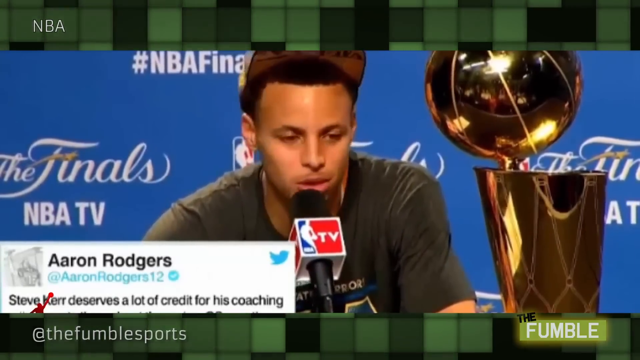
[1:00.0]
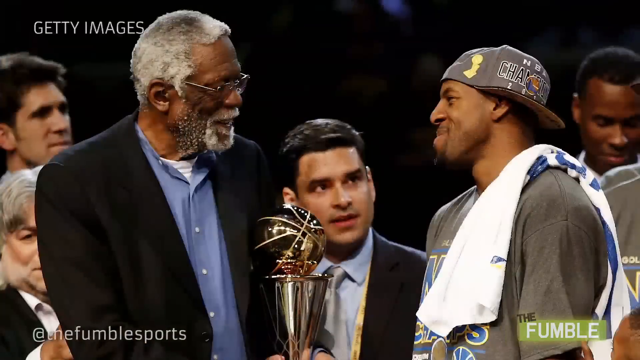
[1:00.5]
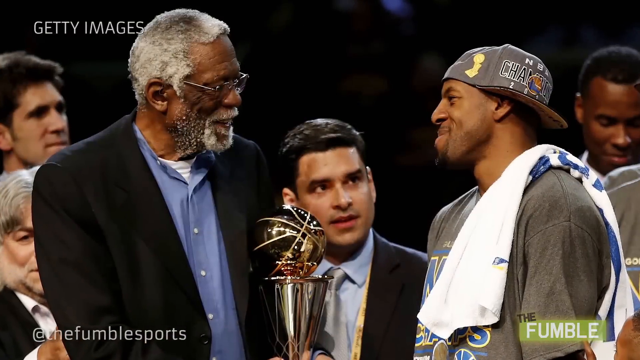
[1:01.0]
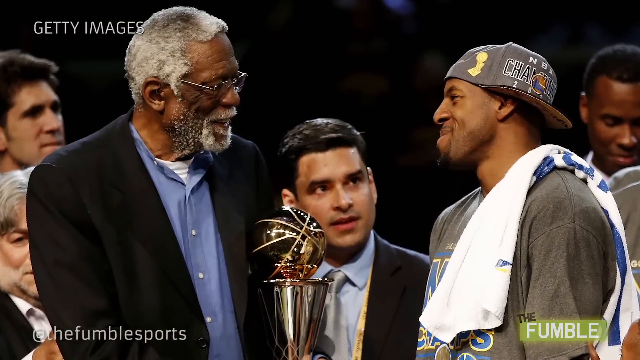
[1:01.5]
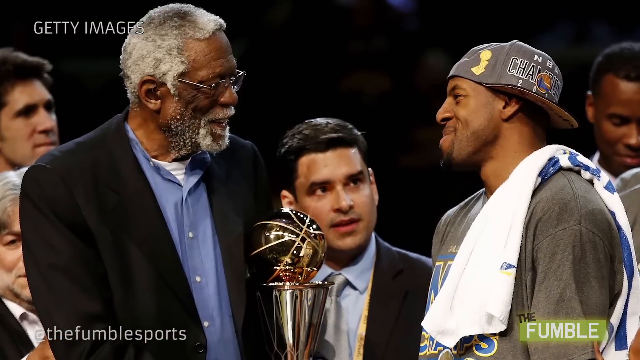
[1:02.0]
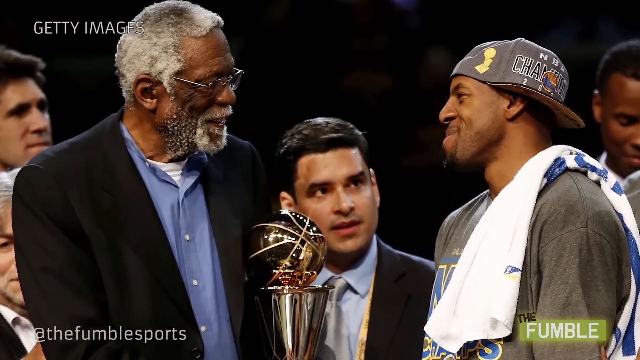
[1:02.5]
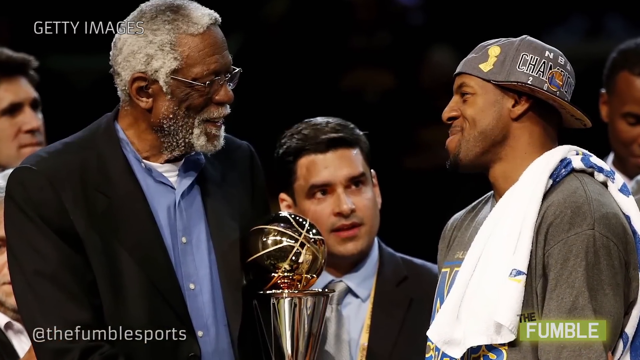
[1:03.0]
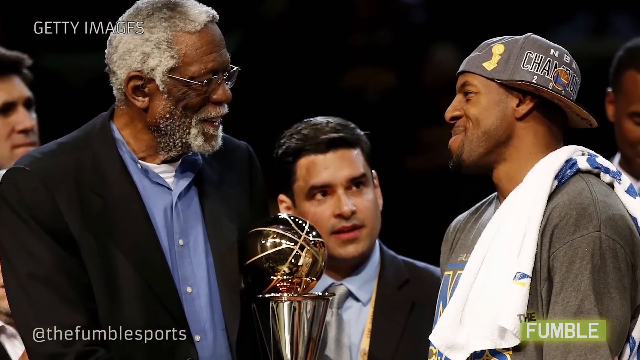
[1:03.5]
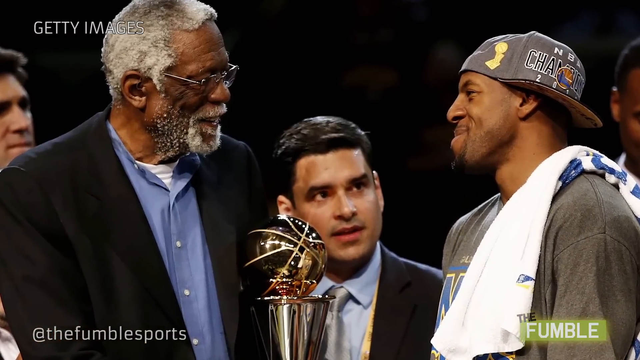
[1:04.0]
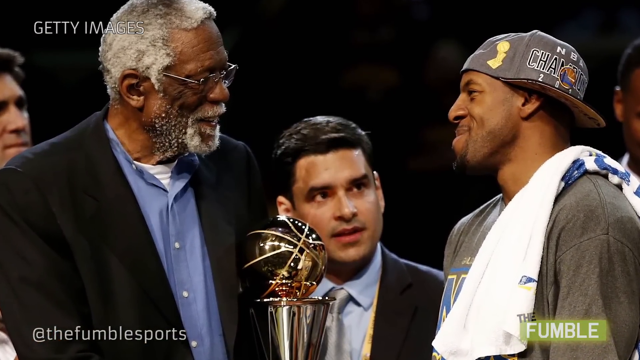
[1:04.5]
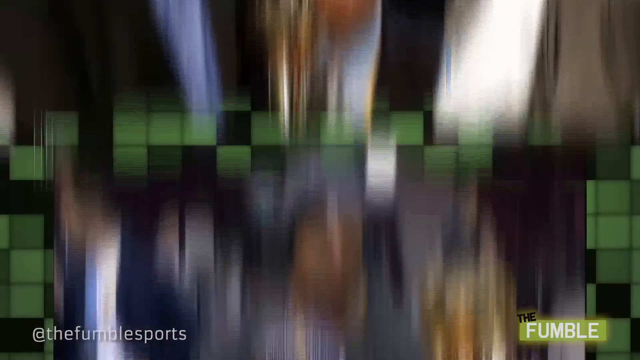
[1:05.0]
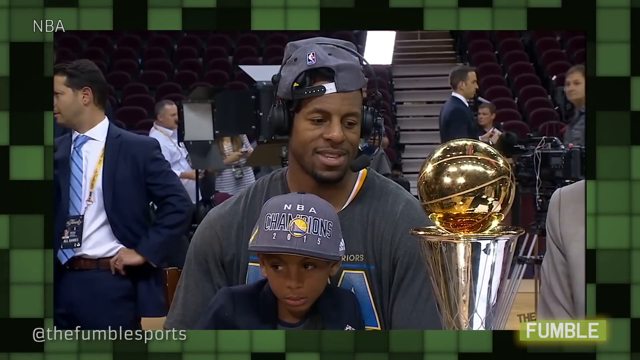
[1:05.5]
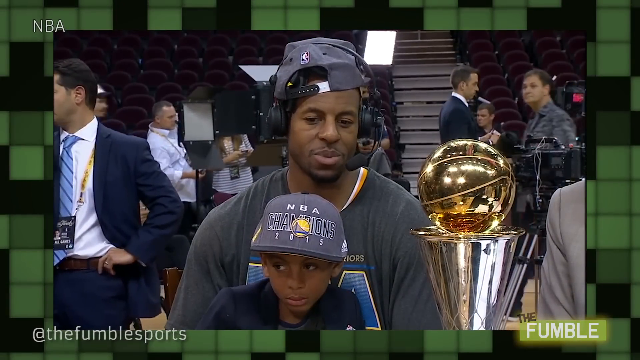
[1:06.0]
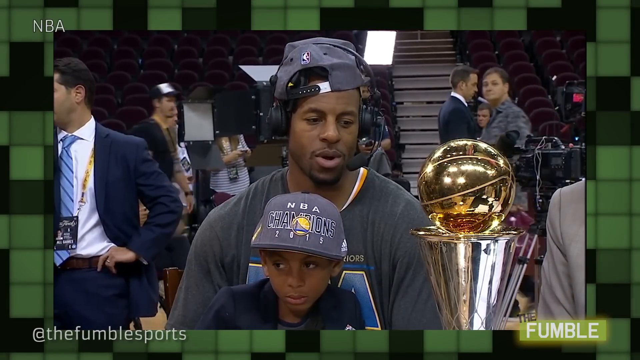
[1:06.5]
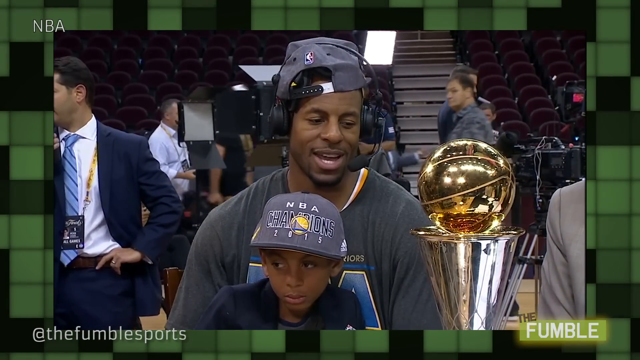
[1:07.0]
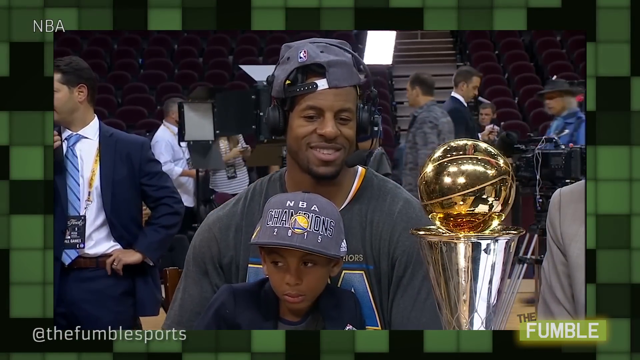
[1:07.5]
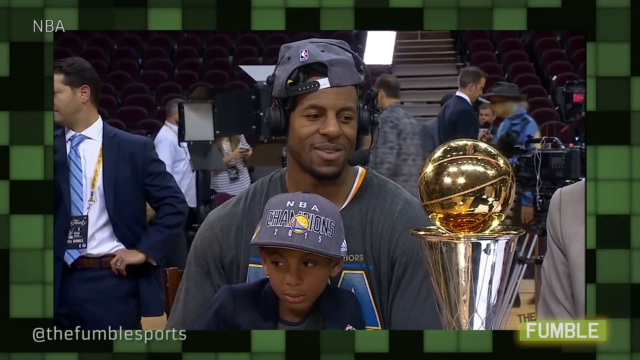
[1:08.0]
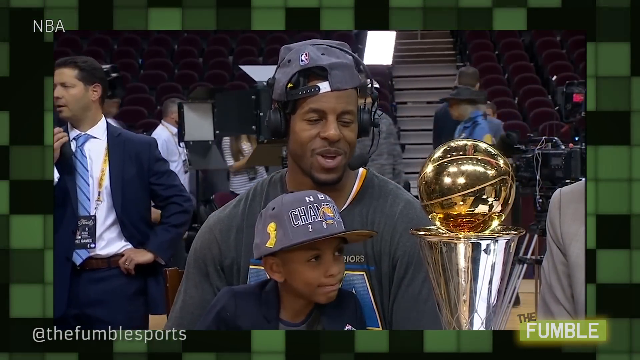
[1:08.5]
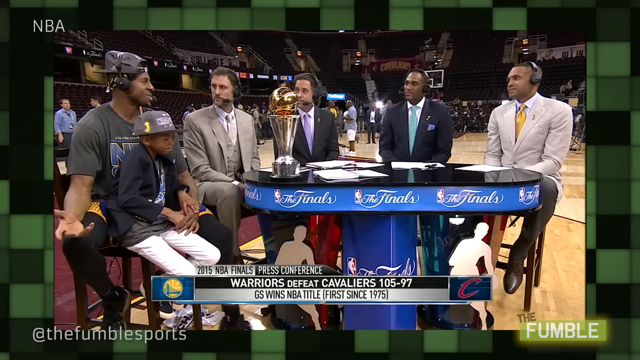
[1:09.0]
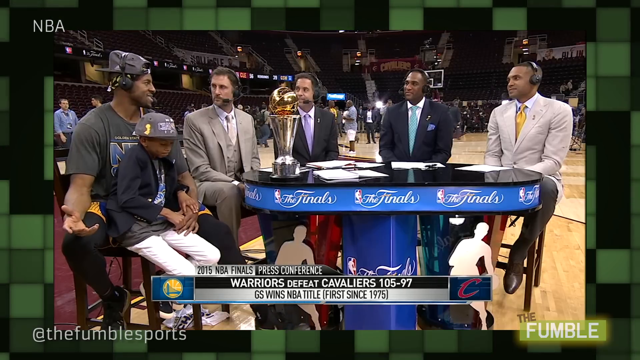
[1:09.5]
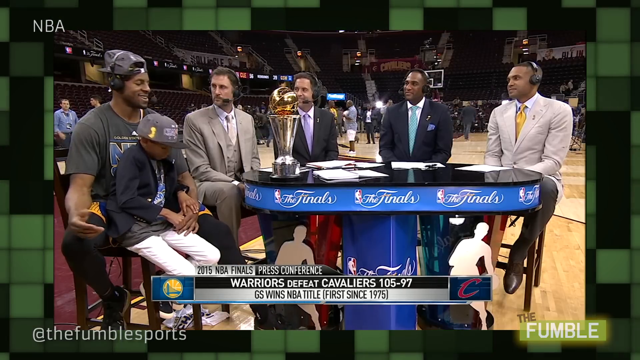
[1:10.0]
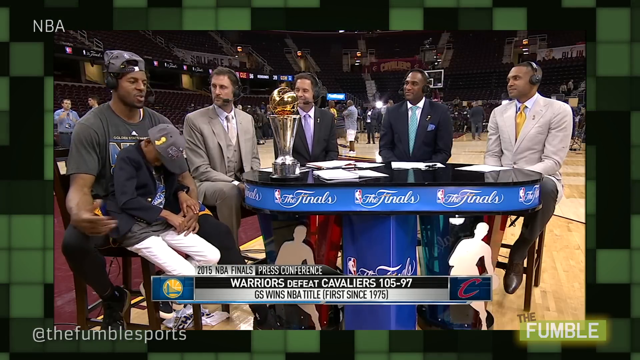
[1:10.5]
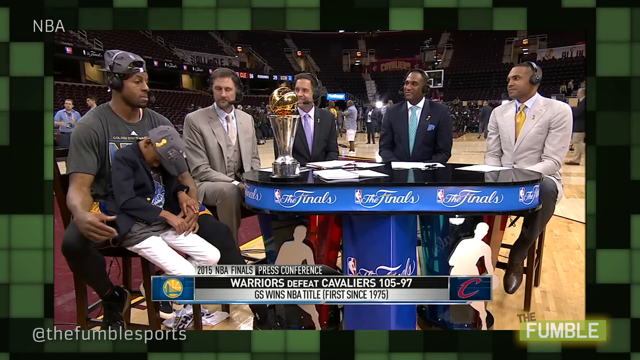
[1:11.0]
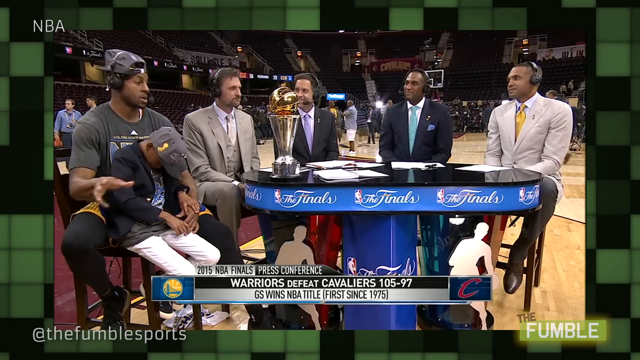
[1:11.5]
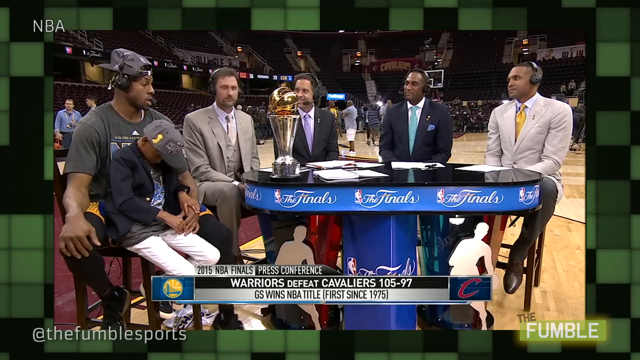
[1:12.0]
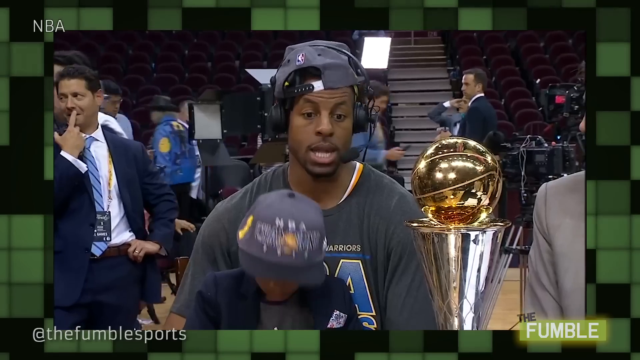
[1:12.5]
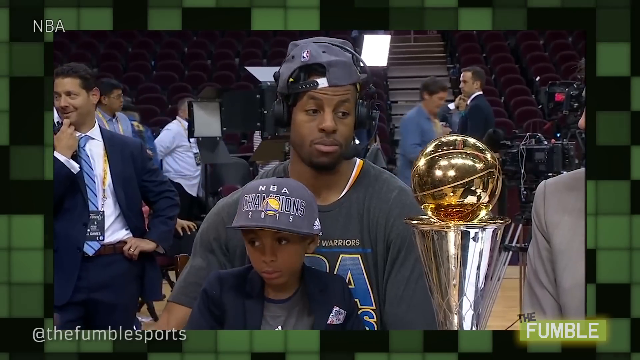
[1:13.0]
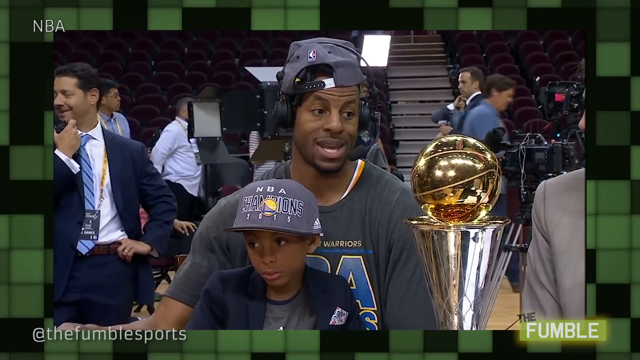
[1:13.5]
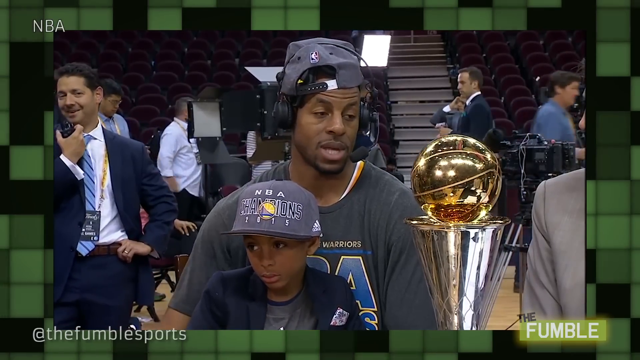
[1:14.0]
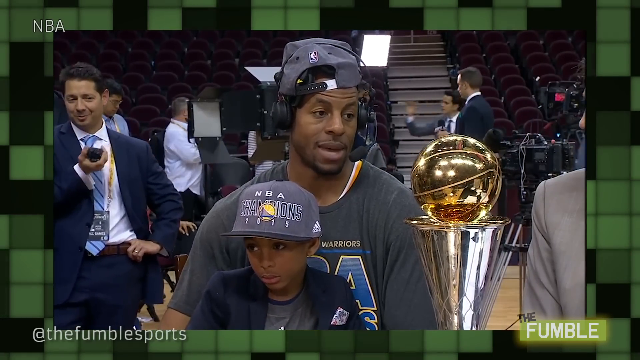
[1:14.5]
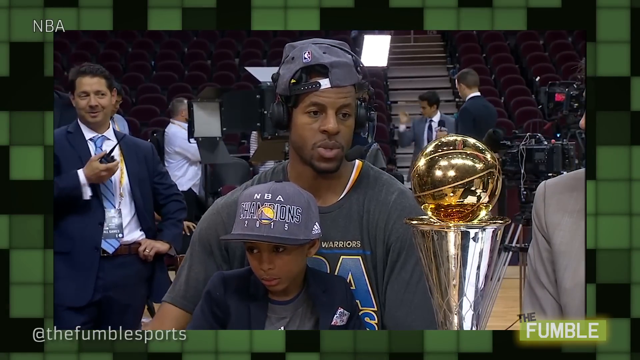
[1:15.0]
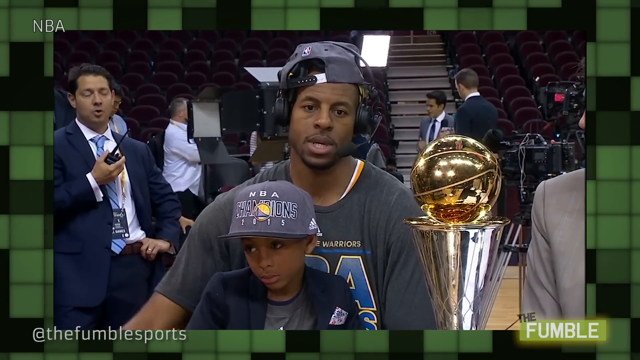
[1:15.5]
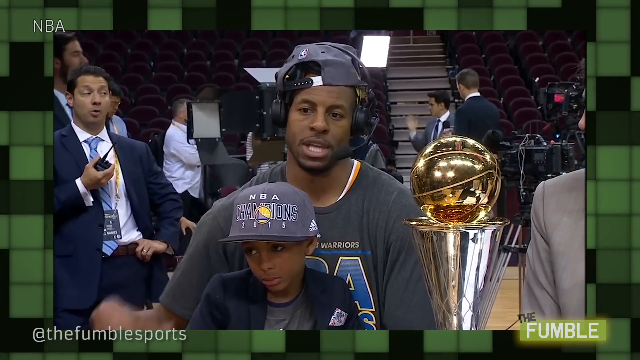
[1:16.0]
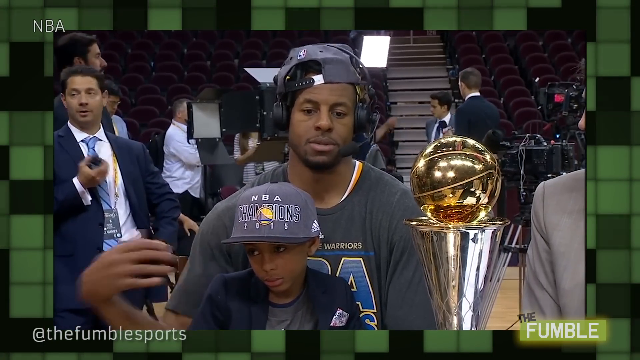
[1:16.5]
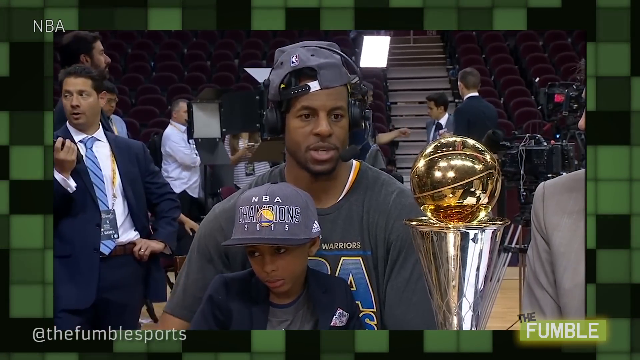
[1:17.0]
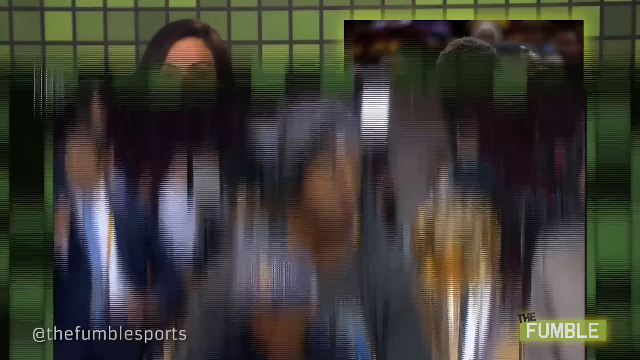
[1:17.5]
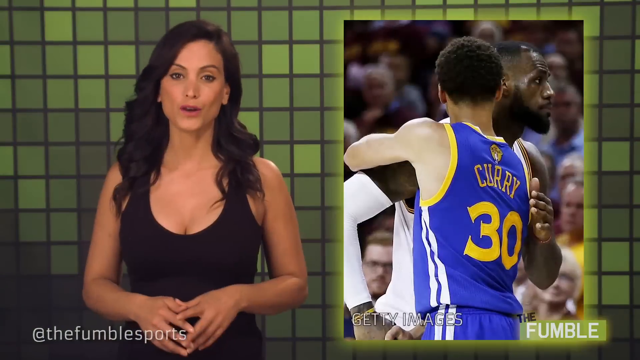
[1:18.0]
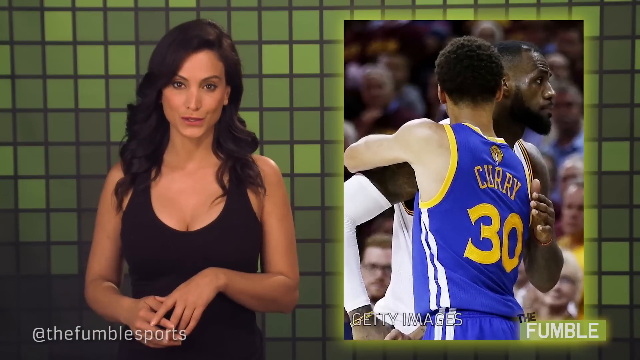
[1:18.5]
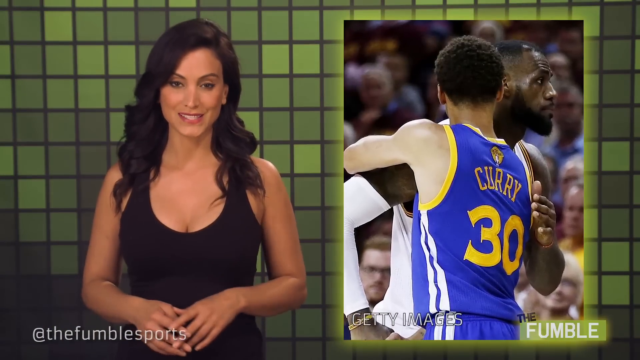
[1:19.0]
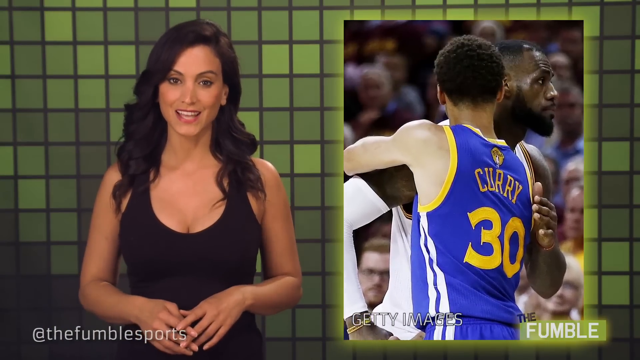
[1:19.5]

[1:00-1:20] An image shows an elderly man wearing glasses, a black suit jacket and a blue shirt with a white t-shirt underneath, holding a trophy and looking to his left, smiling at a younger man. The younger man wears a grey t-shirt, a cap on backwards and slightly to the left, and has a white towel over his left shoulder; the two smile at each other. The camera zooms in on the image. The video transitions to a man with what looks to be his son, wearing an NBA champions cap, talking to the camera and smiling, with a trophy on the right-hand side of the screen. The shot pans out to reveal four analysts or hosts next to him, all nodding along and looking at him as he talks. A bar at the bottom of the screen reads "2015 NBA Finals Press Conference, Warriors defeat Cavaliers 105-97". The video returns to a close-up of the man and his child, with a security guard in a navy blue suit in the background holding a radio in his right hand. It then transitions back to the news reporter, who smiles and talks to the camera with her hands over her belly, alongside what looks to be a picture of Steph Curry and LeBron James embracing mid-game, wearing different team outfits.